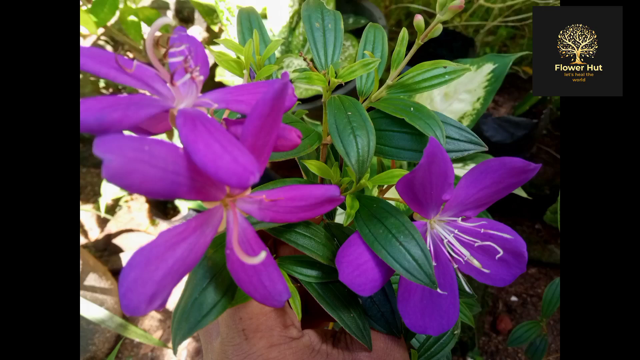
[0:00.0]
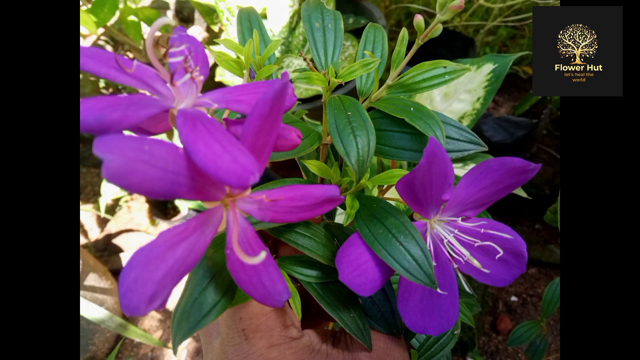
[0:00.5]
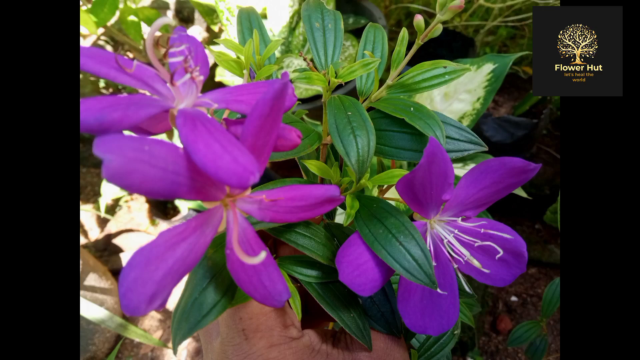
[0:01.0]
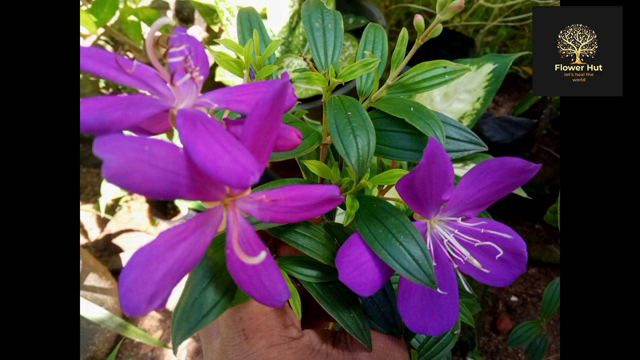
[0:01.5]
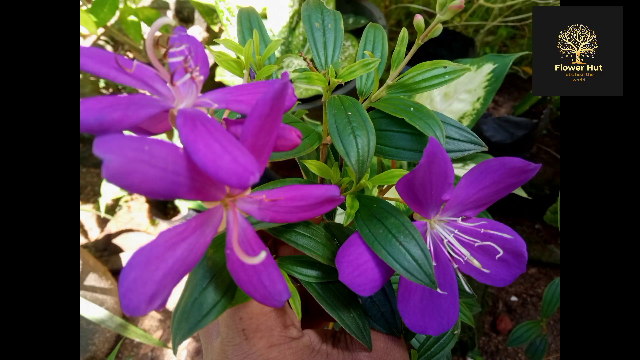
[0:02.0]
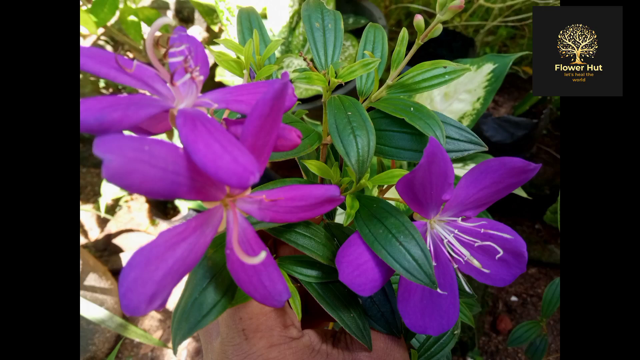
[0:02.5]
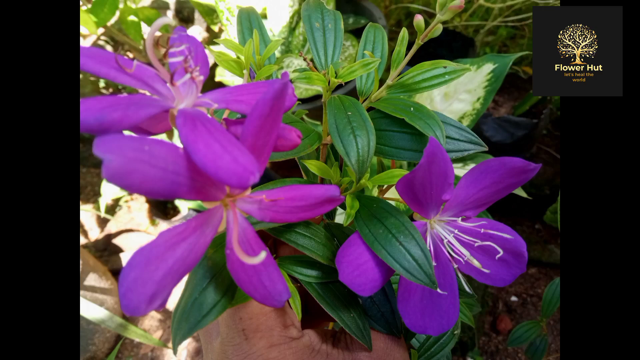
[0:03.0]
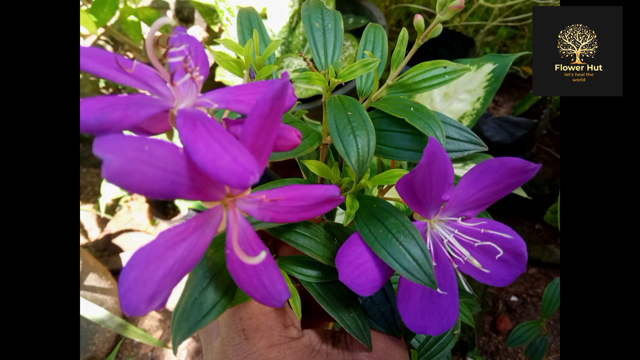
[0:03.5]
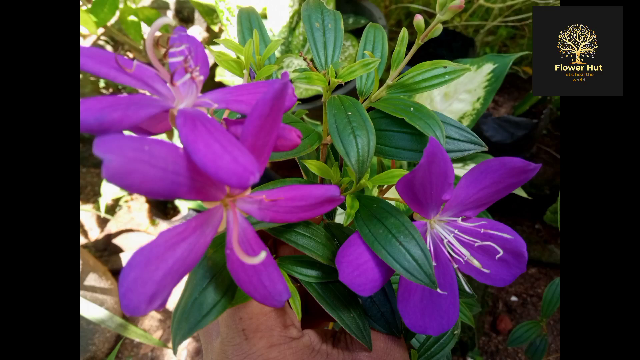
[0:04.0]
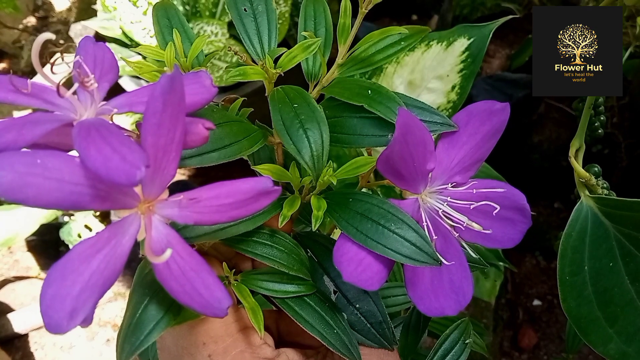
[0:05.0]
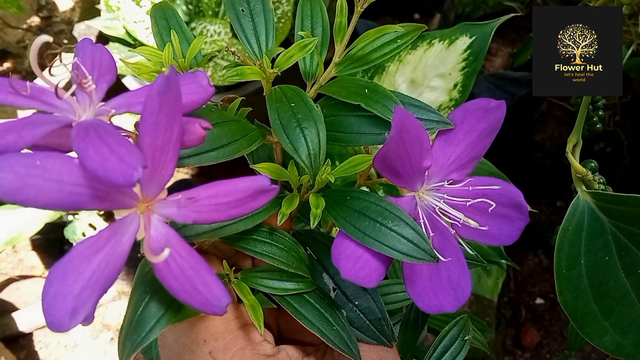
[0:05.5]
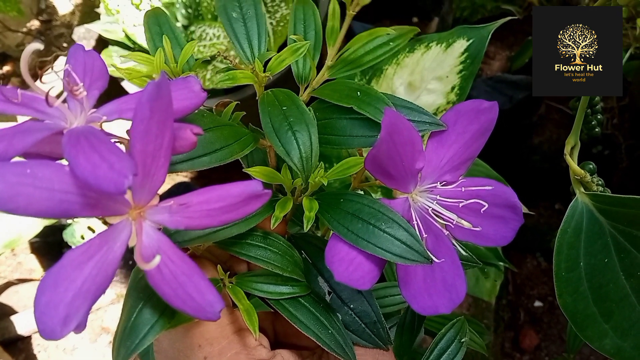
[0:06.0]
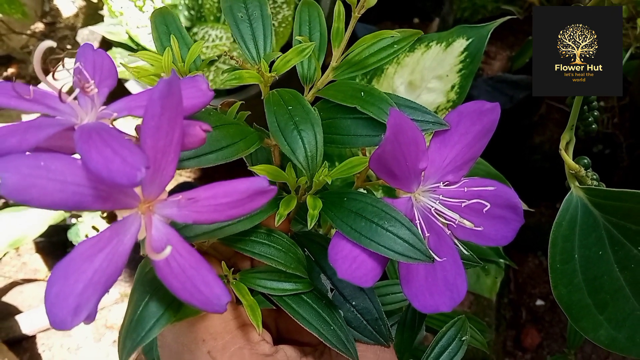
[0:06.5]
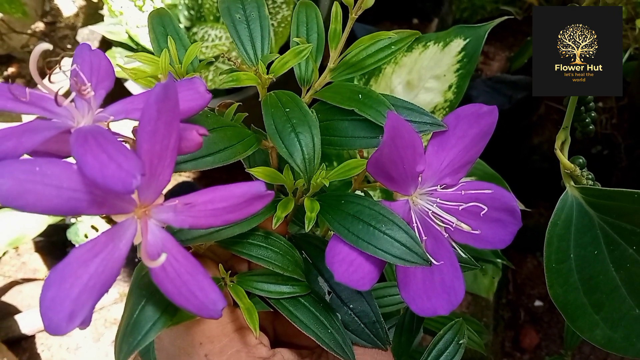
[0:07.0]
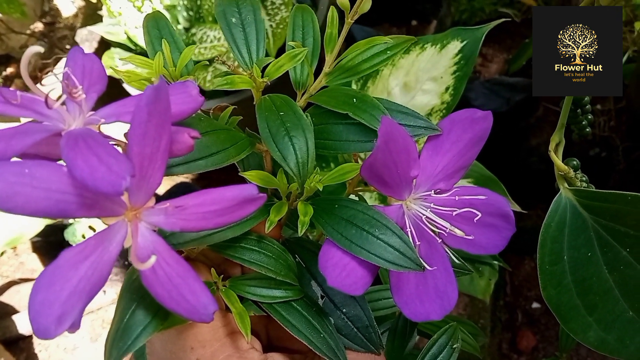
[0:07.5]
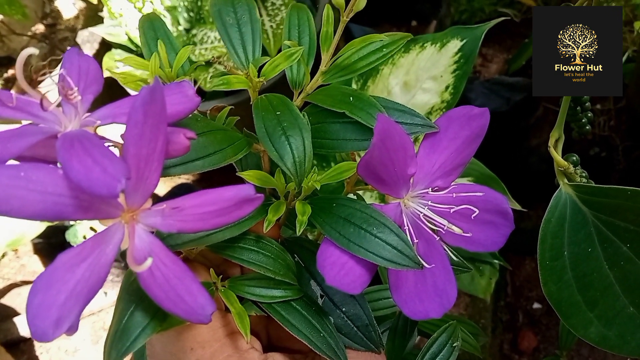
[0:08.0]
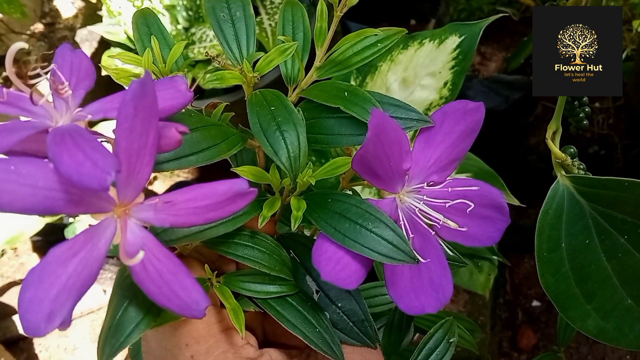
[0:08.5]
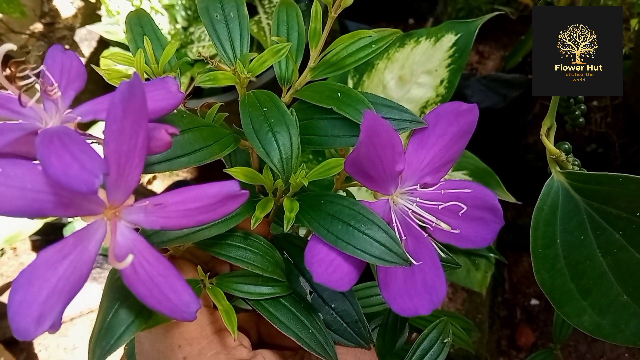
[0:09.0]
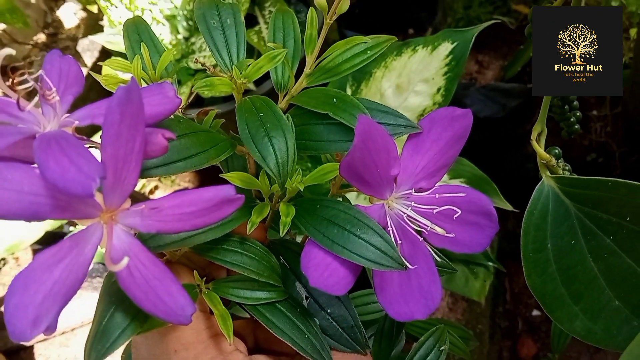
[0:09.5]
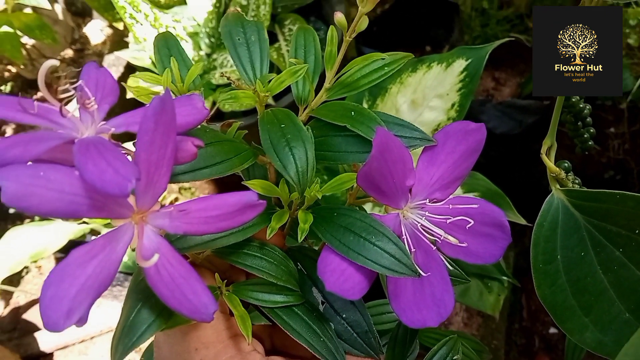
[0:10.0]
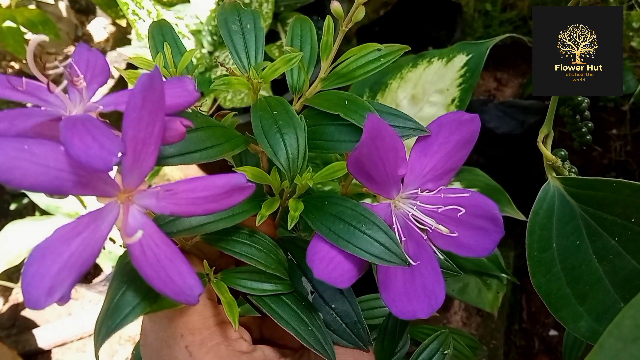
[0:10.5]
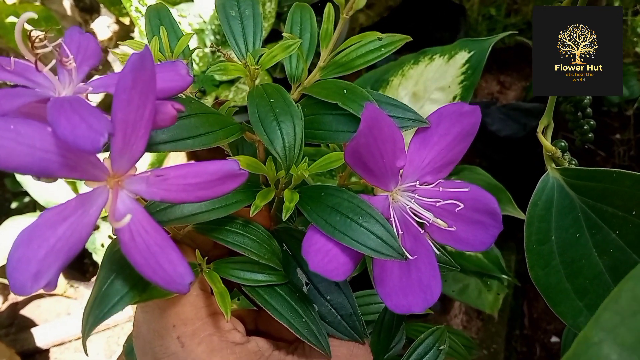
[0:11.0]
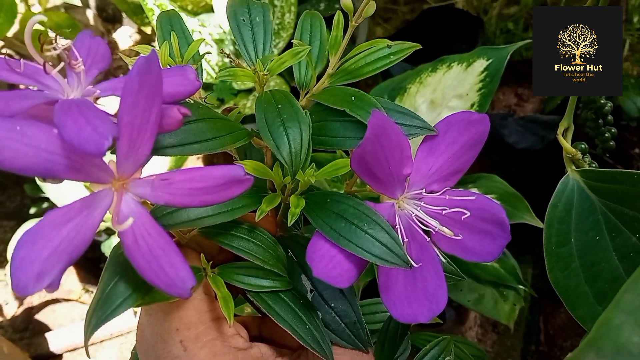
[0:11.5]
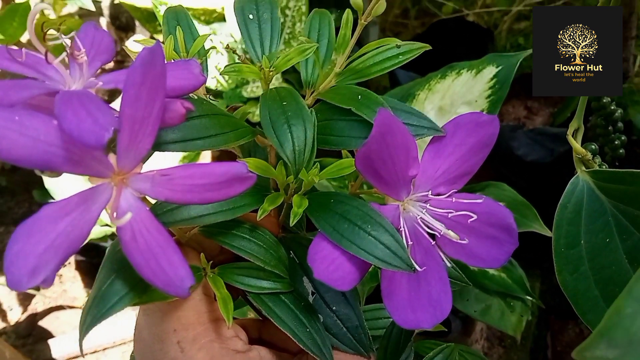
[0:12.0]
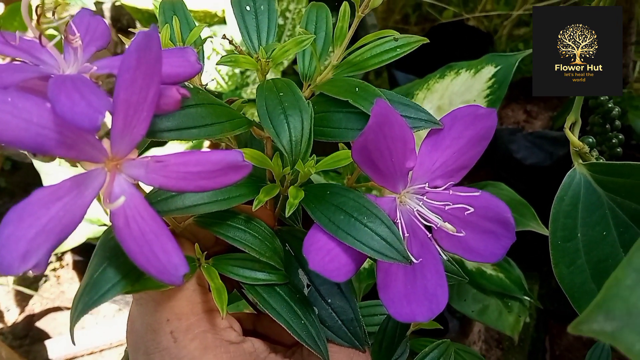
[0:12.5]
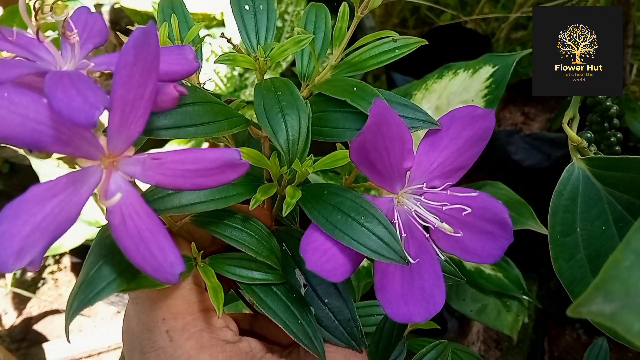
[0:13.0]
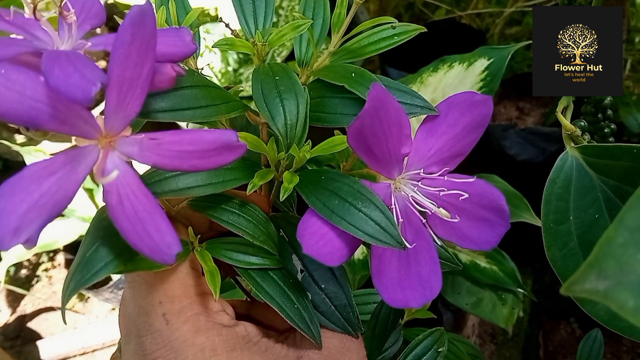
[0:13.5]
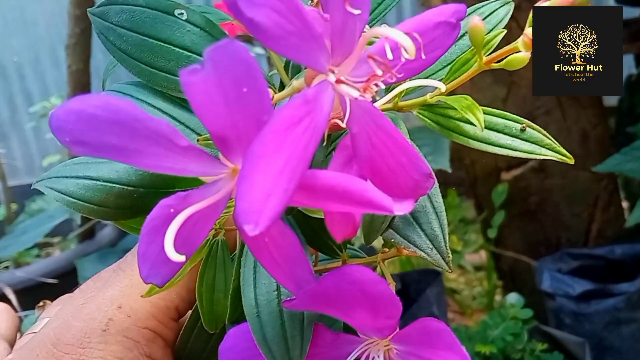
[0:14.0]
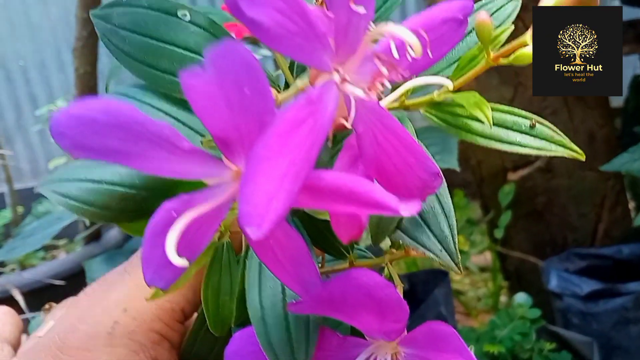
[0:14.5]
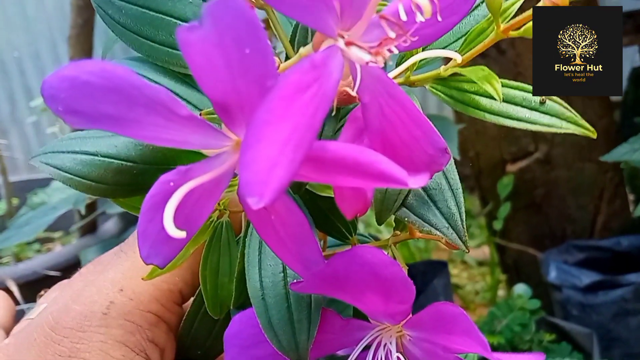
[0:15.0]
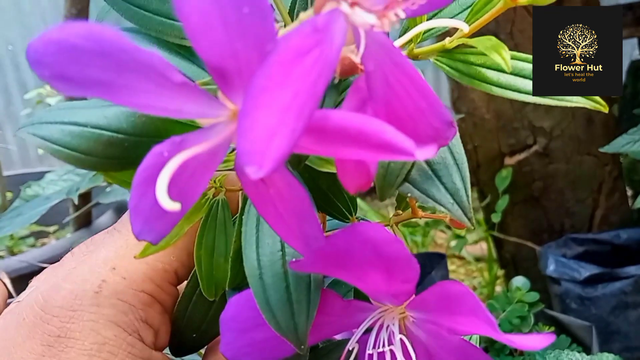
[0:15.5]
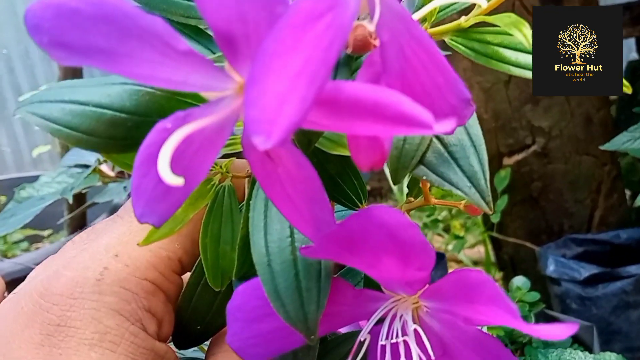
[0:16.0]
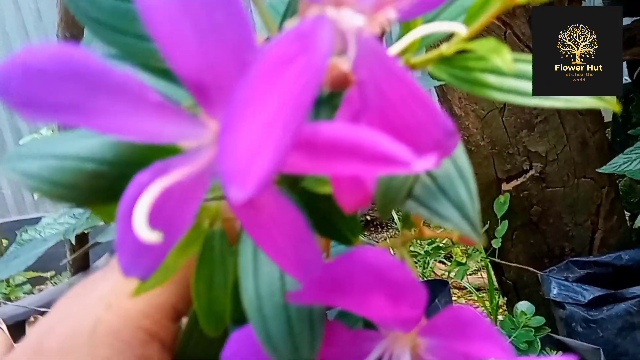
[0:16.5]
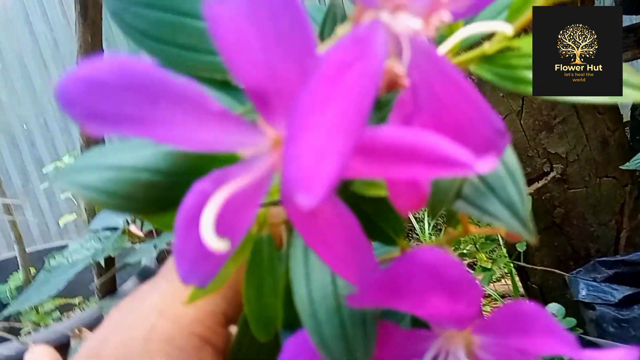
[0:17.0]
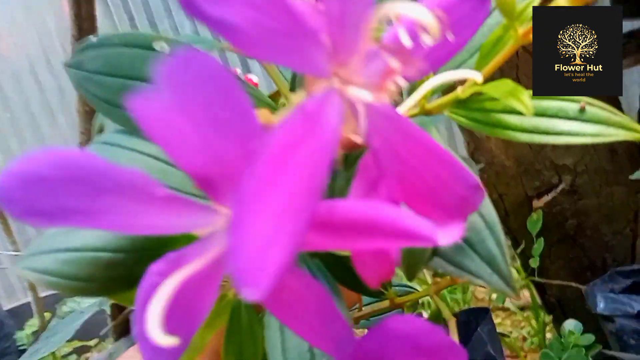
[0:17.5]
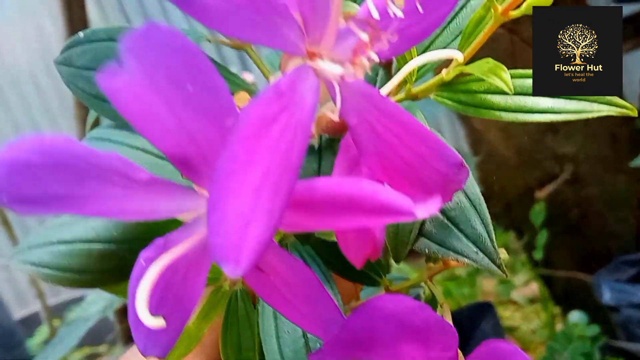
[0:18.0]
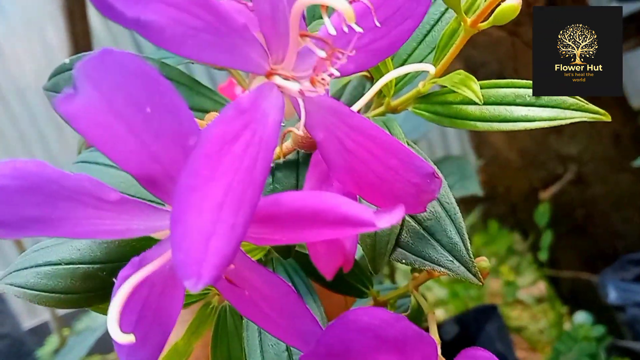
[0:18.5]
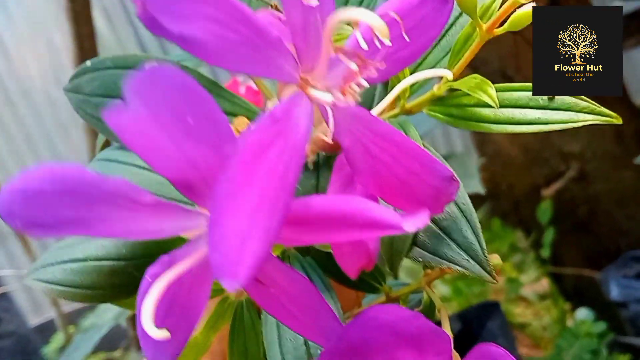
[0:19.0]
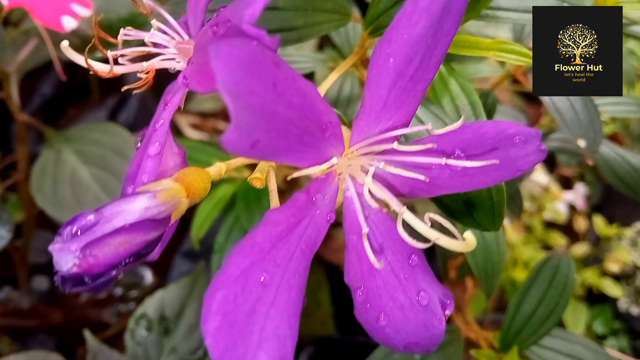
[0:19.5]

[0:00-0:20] A green plant with a purple flower is the main subject. Each flower has five purple petals, with white extrusions coming out of its center, and the supporting leaves are green. The species of the flower is unclear. In the top right corner, the text "flower hut" appears, apparently the producer of the video. There also seem to be some type of buds growing out of the stems of the supporting leaves; they appear to have purple tips and are probably flowers that will soon bloom.